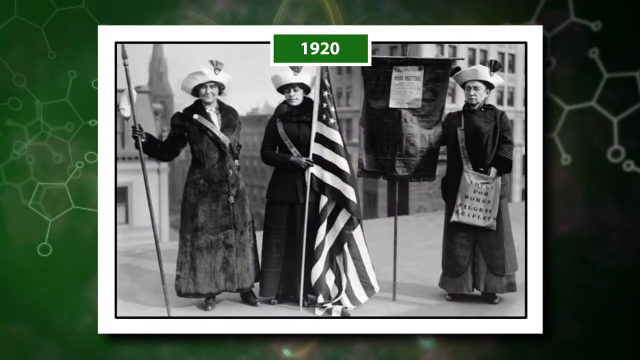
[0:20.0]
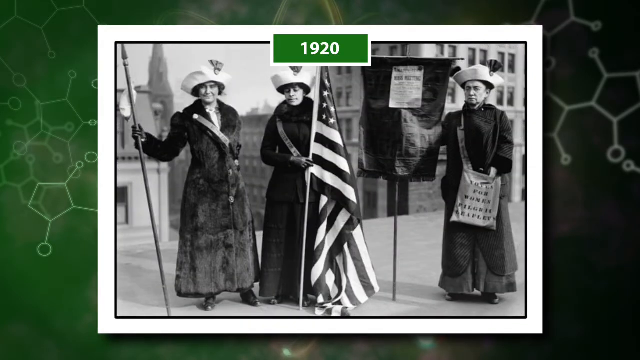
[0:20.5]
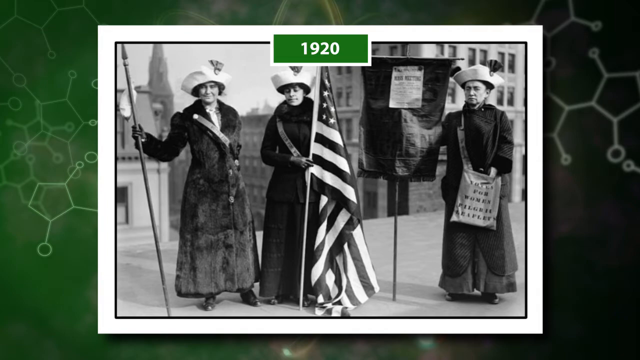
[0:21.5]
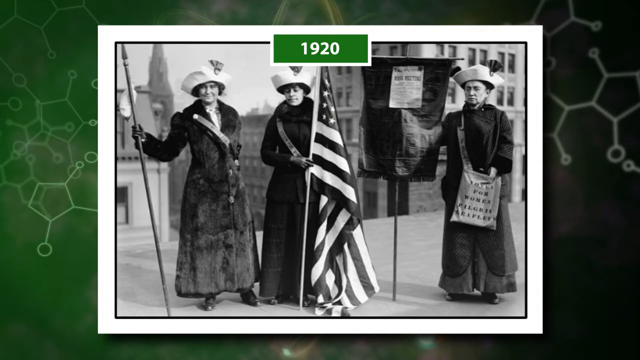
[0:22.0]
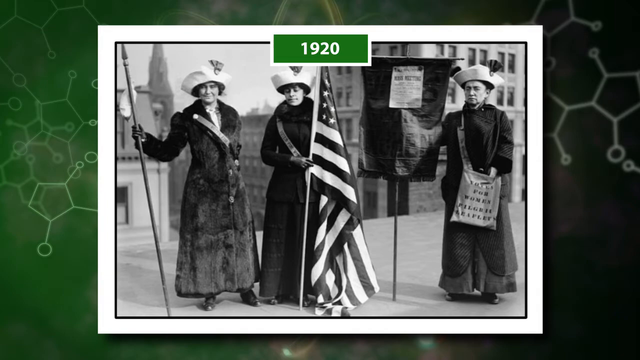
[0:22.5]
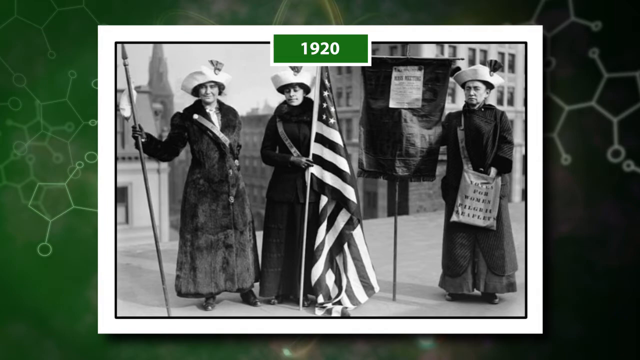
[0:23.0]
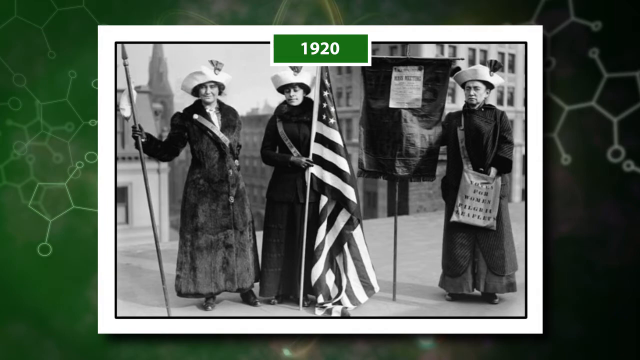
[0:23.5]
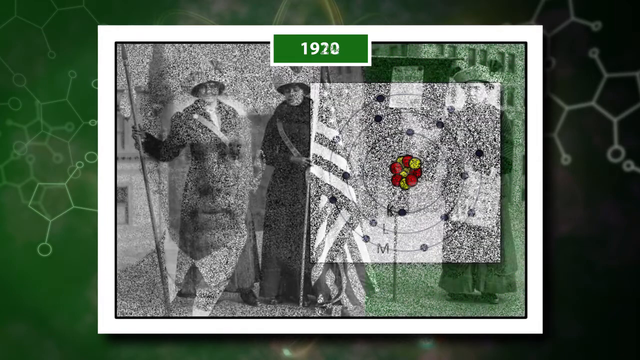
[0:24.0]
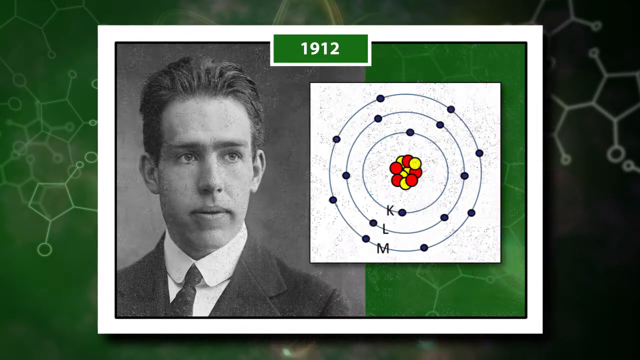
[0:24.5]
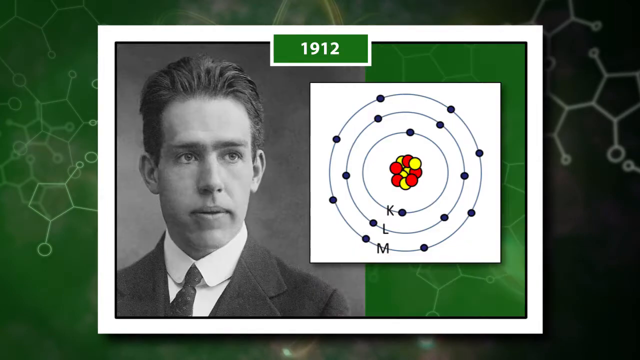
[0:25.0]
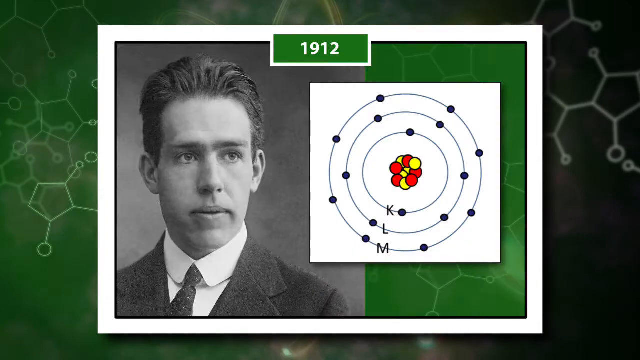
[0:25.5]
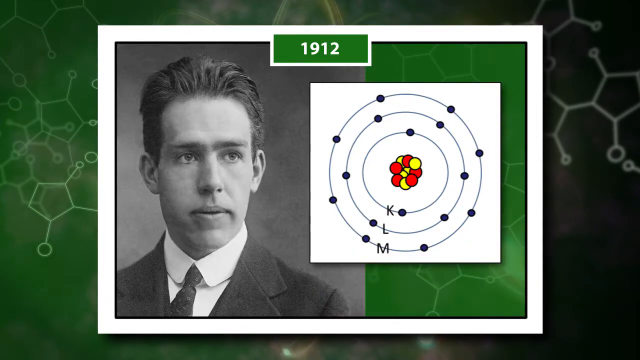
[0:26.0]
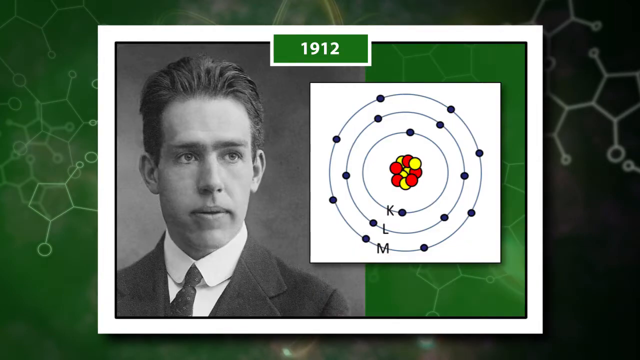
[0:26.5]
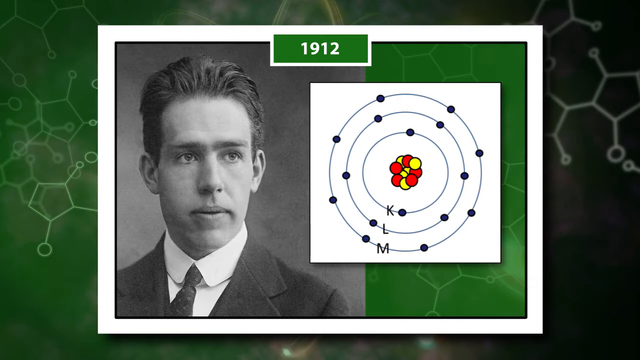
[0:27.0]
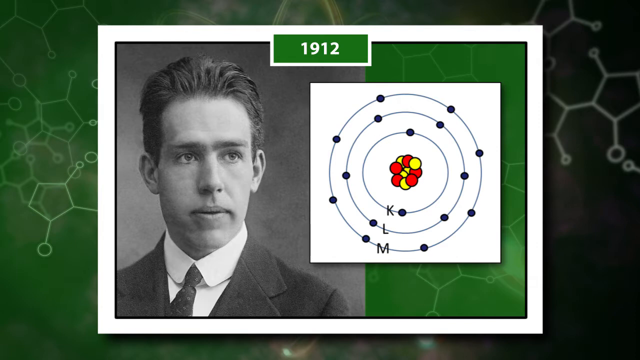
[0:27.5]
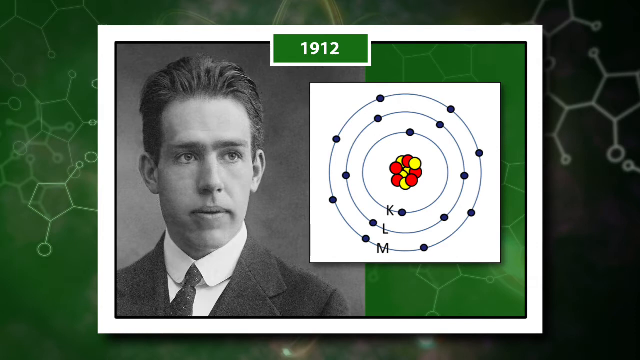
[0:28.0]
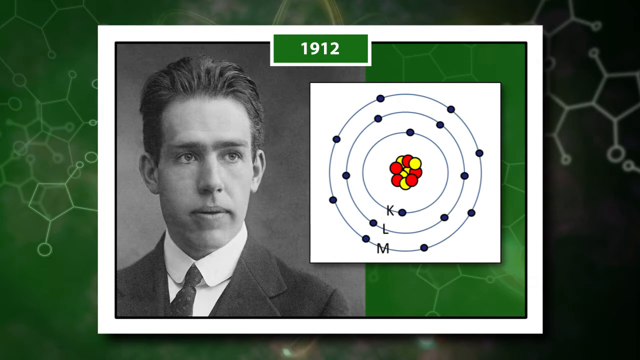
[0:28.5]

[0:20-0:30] A black-and-white photo is zoomed in on three women. One woman holds an American flag, and all of them wear gloves, long jackets and white hats. In the middle there is a green triangle, a rectangle and a green rectangle with "1920" in white; the border of the rectangle is also white. The image then switches to an unidentified man with a unibrow, shown from the chest up on the left side of the screen, wearing a dark tie, a white shirt and a black blazer. On the right side are molecules: in the middle are yellow and red circles, possibly protons and electrons, with three loops going around them, marked "K," "L" and "M." The date "1912" appears, jumping back from 1920.